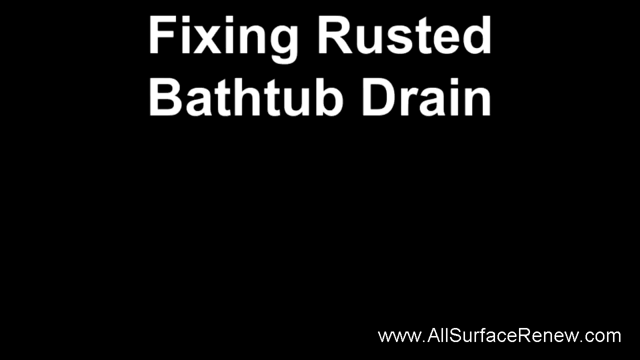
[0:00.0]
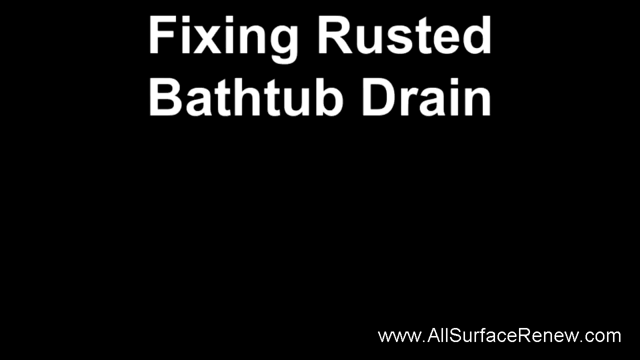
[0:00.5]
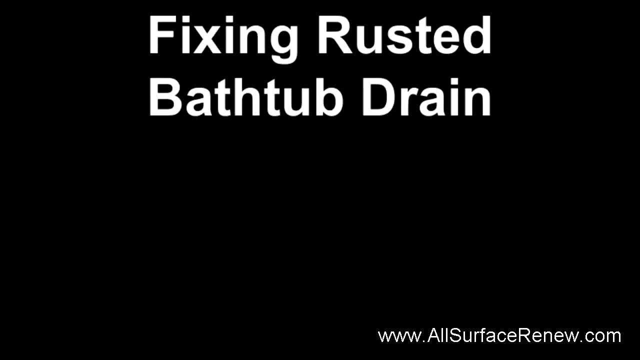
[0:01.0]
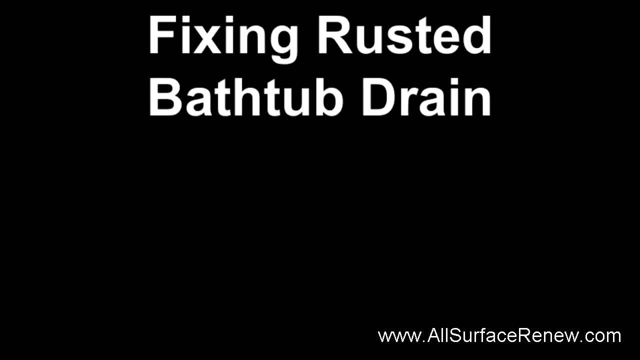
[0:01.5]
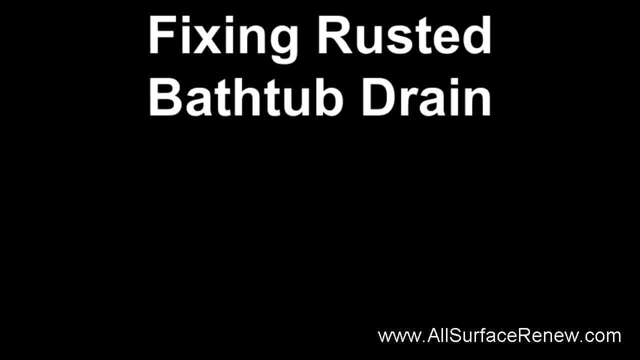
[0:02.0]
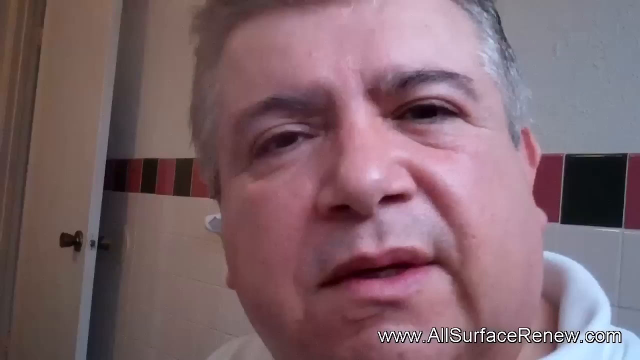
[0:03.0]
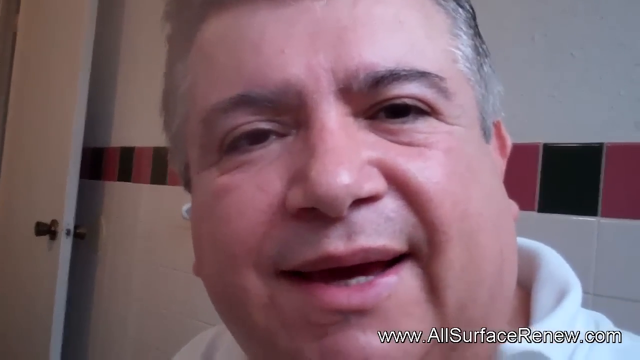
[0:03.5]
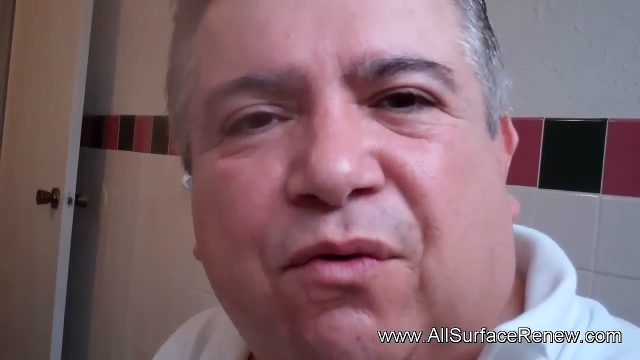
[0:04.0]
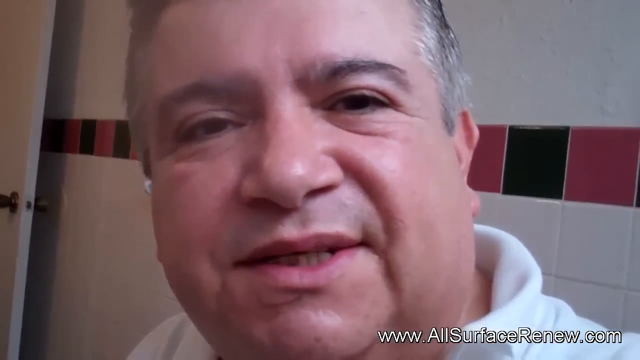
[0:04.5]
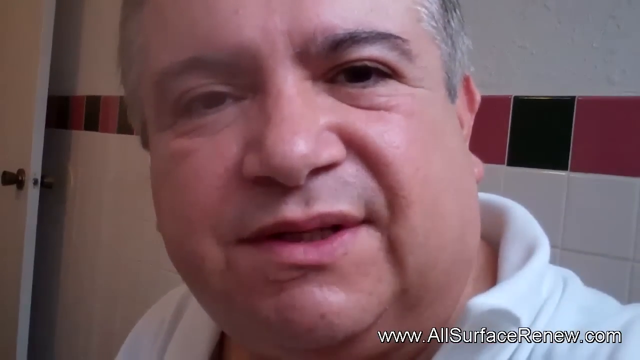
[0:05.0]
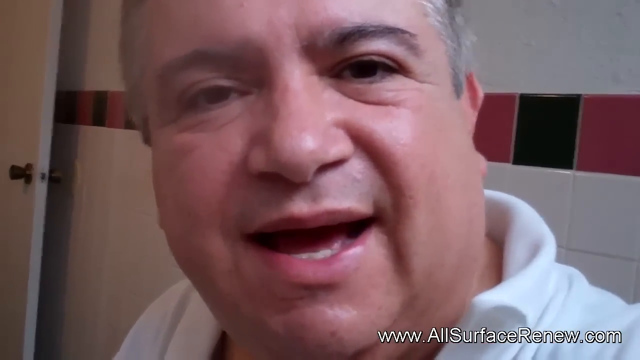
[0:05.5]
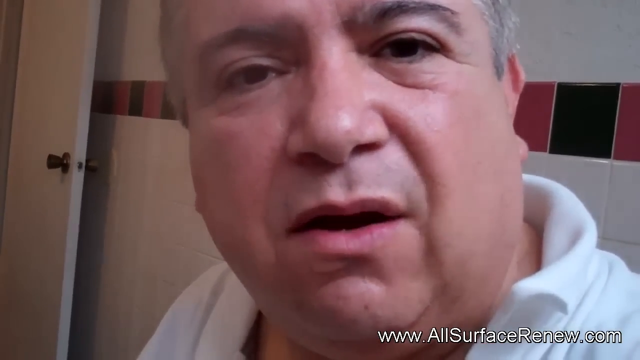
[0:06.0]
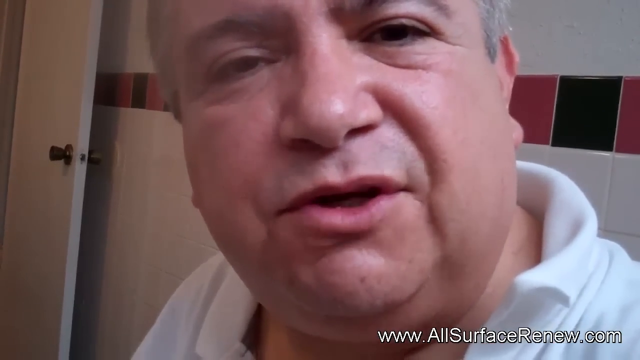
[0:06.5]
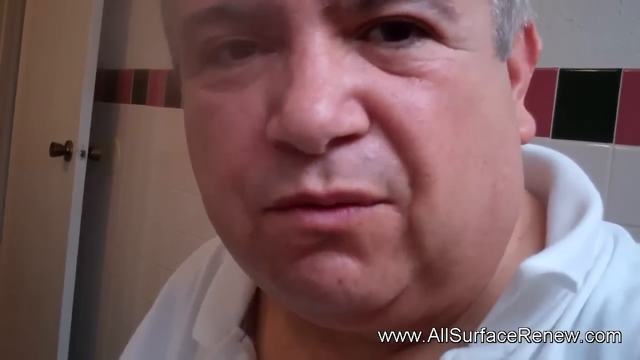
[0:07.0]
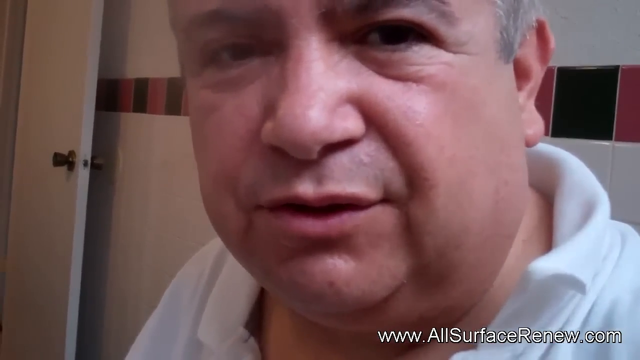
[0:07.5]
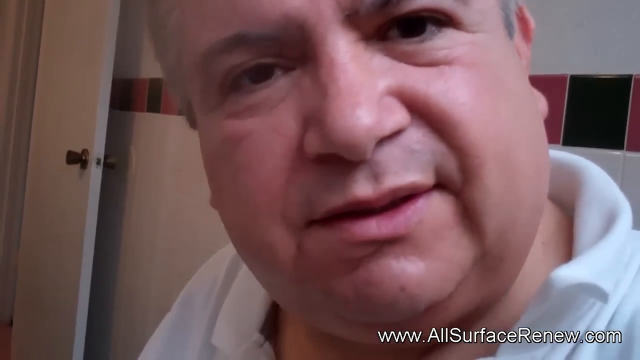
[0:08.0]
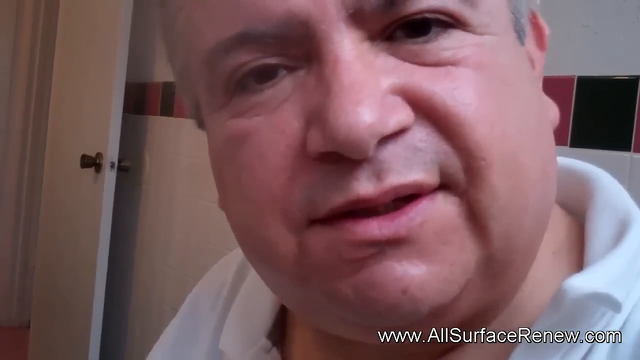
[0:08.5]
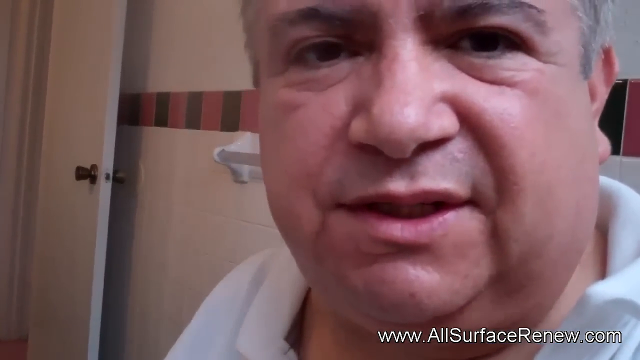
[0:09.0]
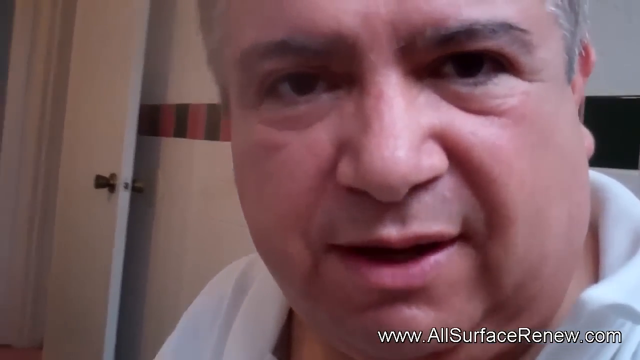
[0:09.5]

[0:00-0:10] The video opens on a black background with white text at the top that reads "fixing rusted bathtub drain." It then cuts to a somewhat overweight man with gray hair and a white sweater sitting in an old-fashioned style bathroom with tile floors and tile walls. The tile wall behind him has a kind of red and black pattern, and there is a door on the left-hand side. It appears to be a very amateur how-to video, with the man seemingly about to walk through the steps of fixing a rusted bathtub drain.